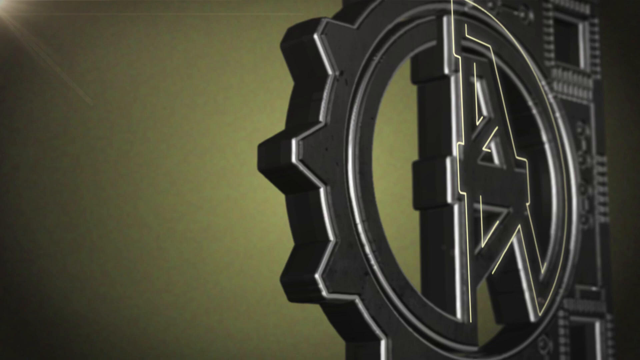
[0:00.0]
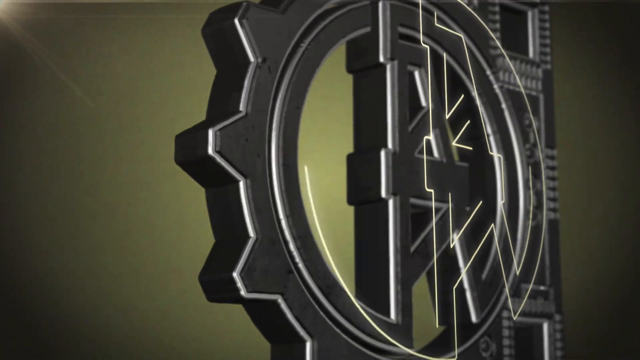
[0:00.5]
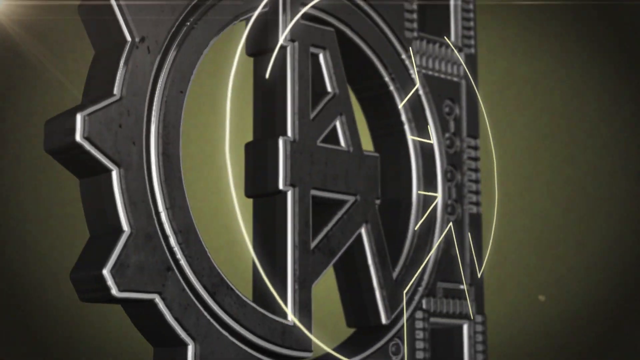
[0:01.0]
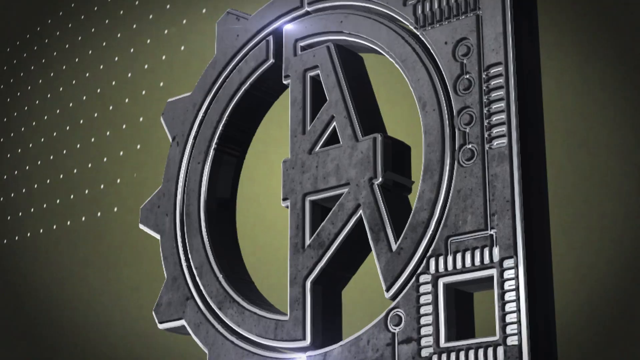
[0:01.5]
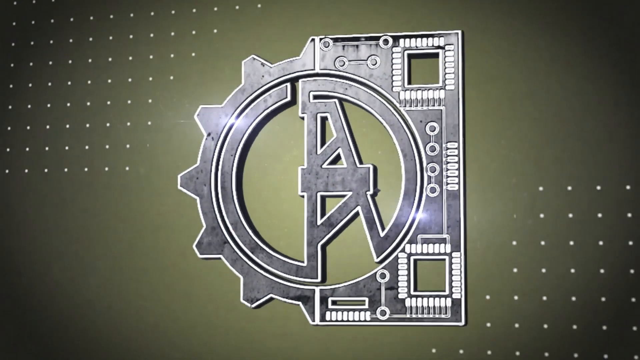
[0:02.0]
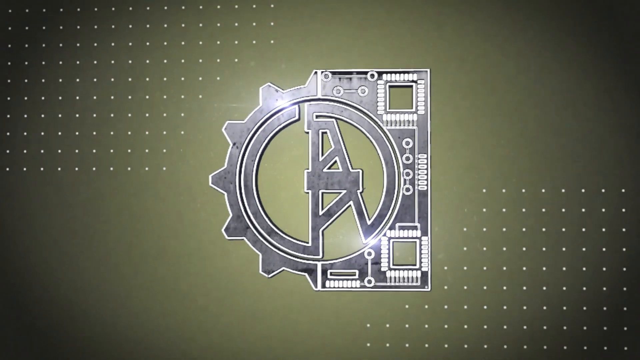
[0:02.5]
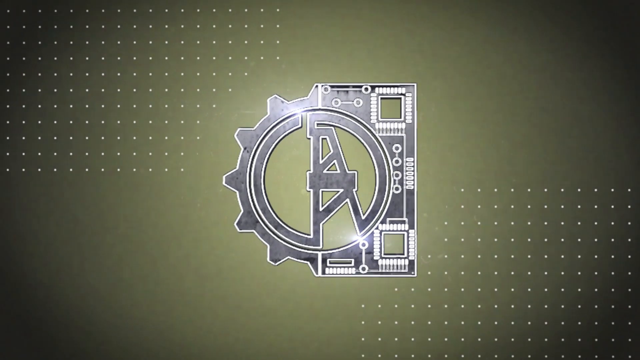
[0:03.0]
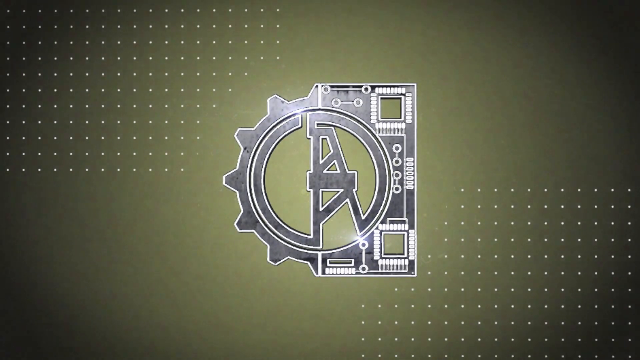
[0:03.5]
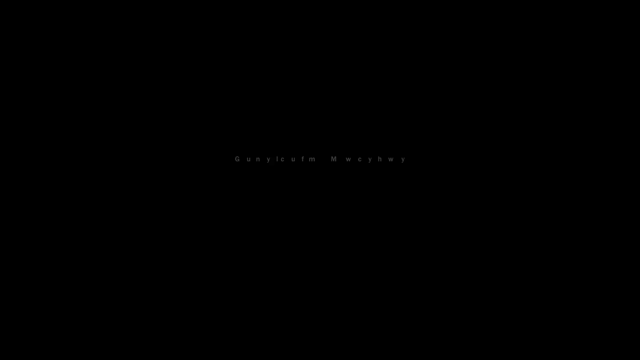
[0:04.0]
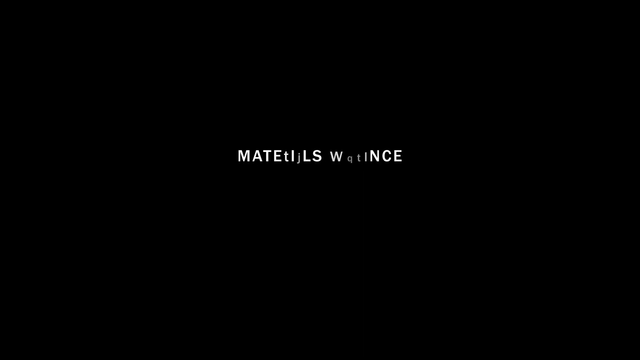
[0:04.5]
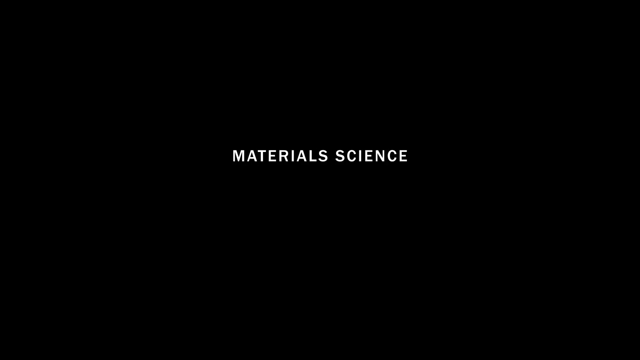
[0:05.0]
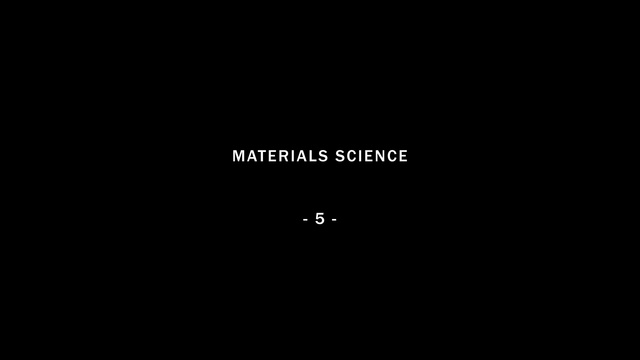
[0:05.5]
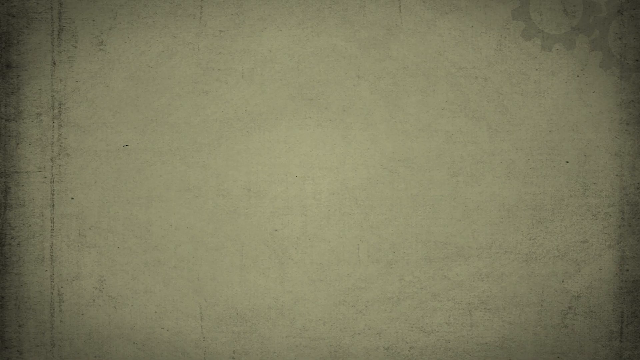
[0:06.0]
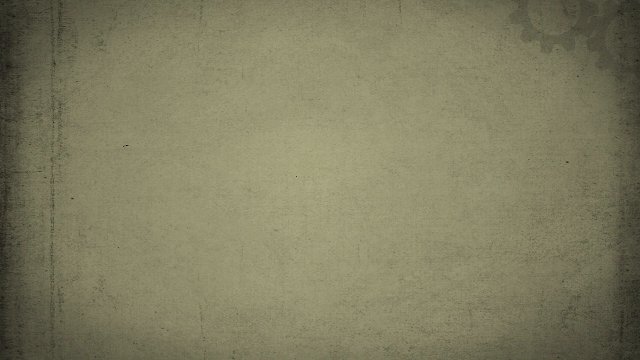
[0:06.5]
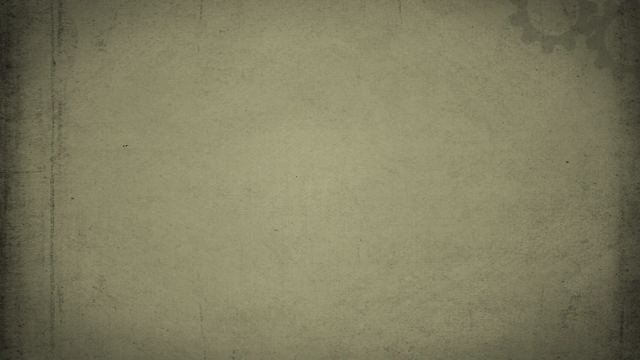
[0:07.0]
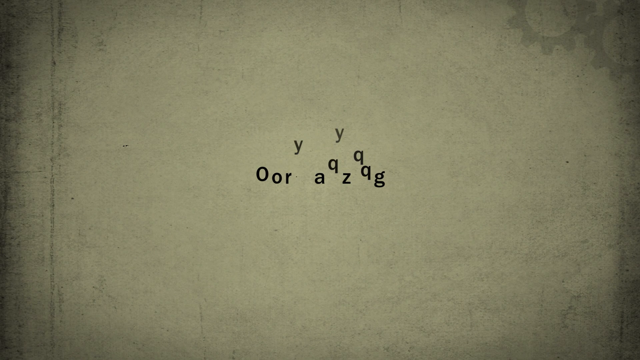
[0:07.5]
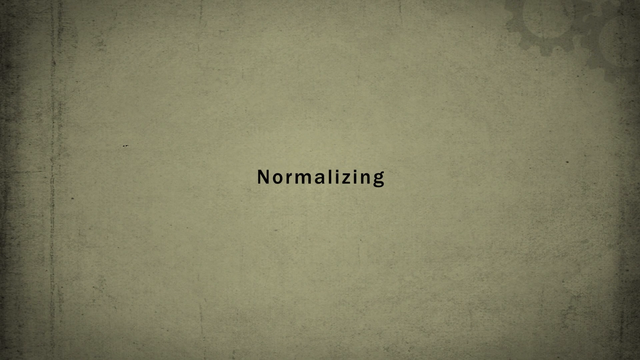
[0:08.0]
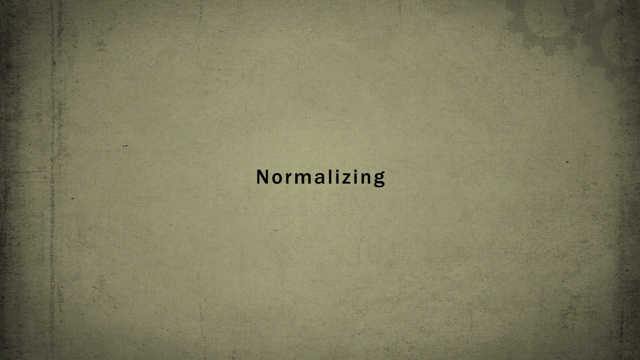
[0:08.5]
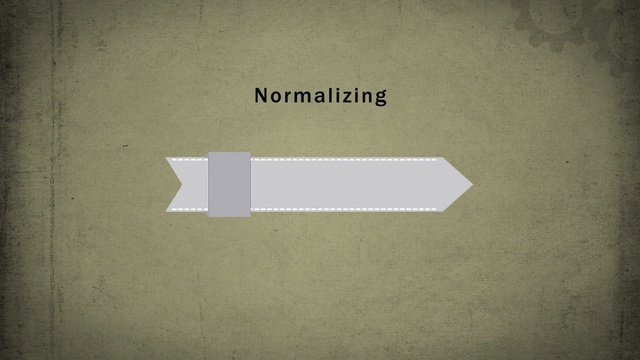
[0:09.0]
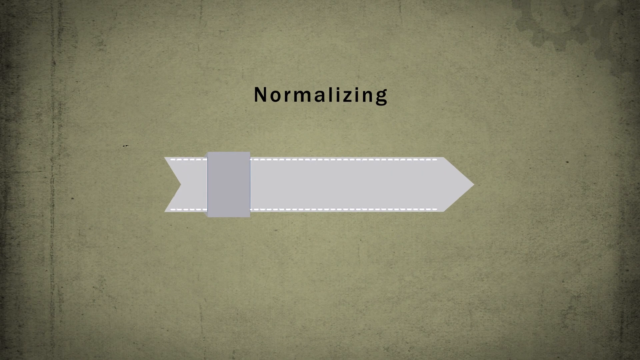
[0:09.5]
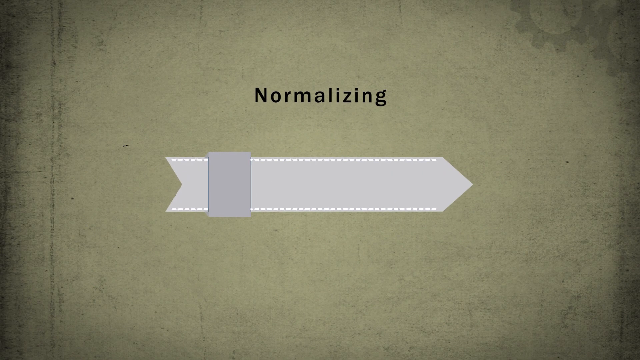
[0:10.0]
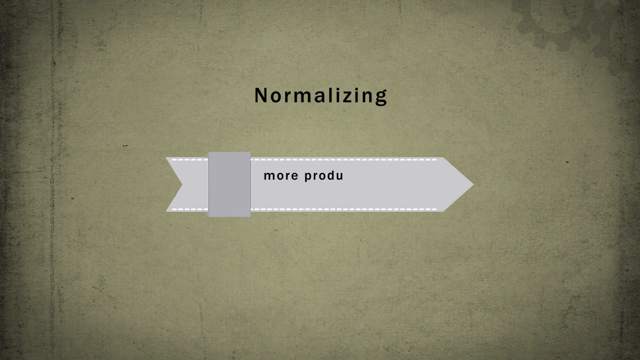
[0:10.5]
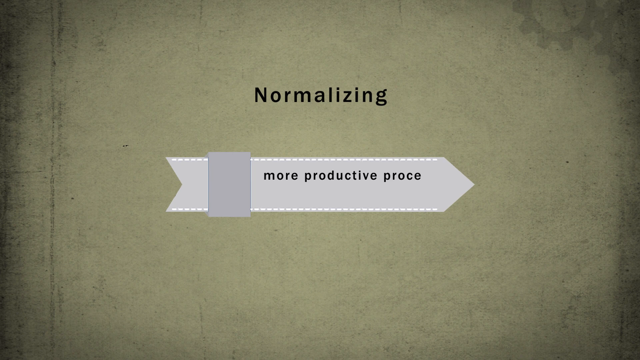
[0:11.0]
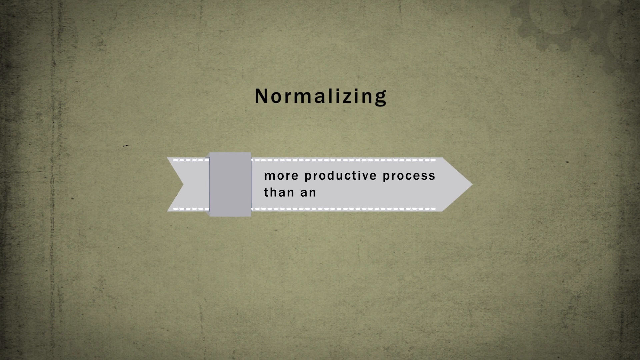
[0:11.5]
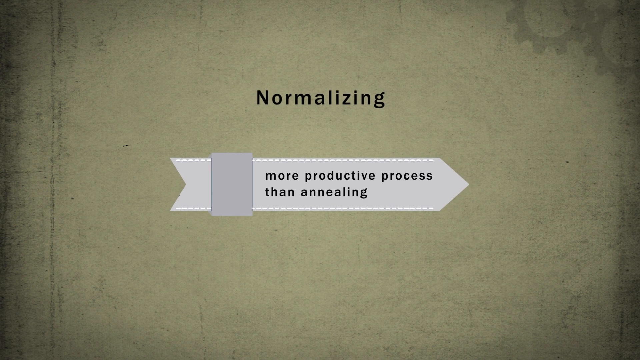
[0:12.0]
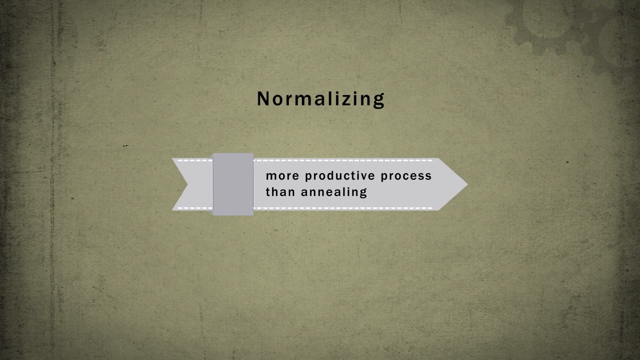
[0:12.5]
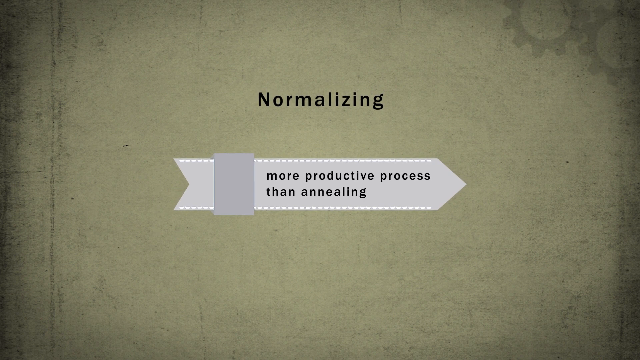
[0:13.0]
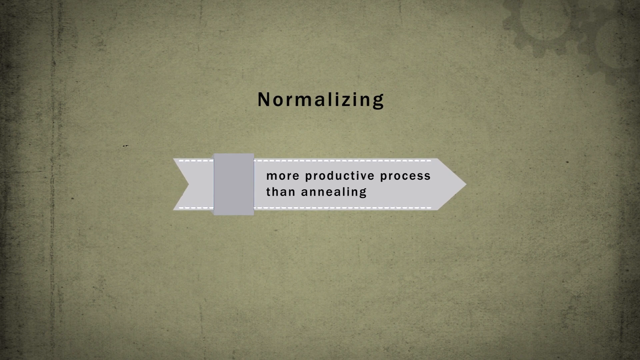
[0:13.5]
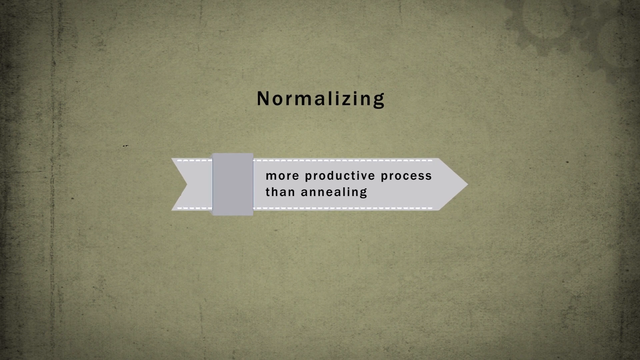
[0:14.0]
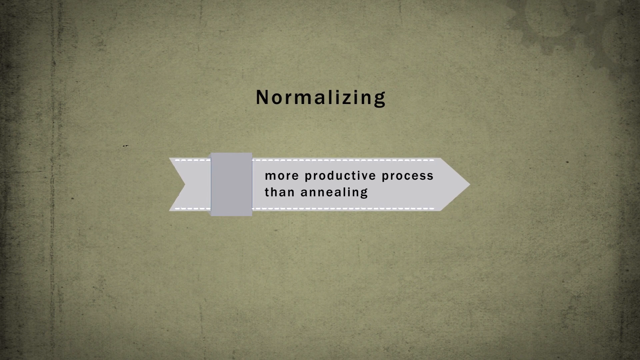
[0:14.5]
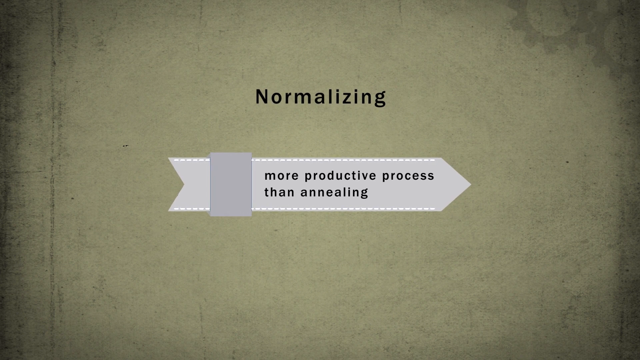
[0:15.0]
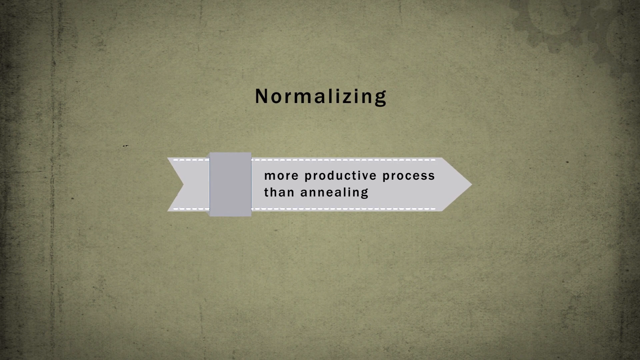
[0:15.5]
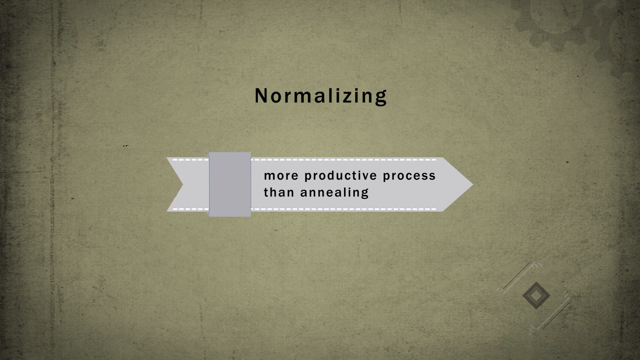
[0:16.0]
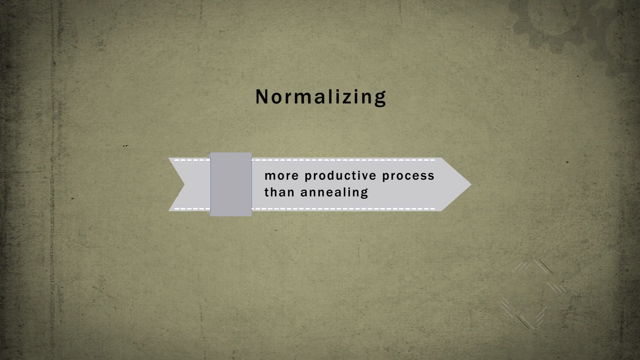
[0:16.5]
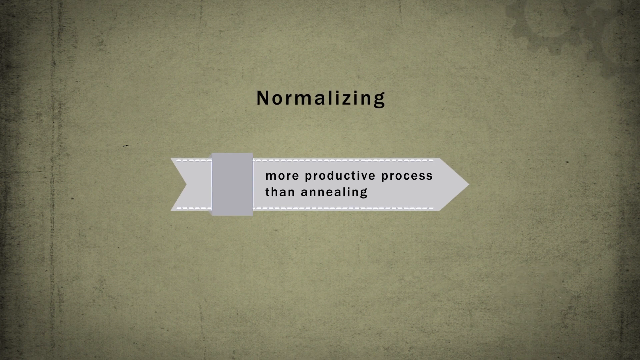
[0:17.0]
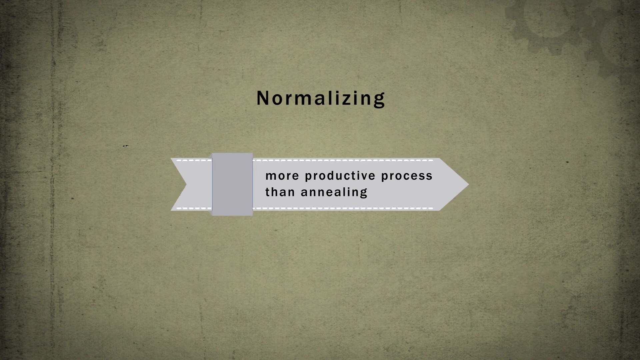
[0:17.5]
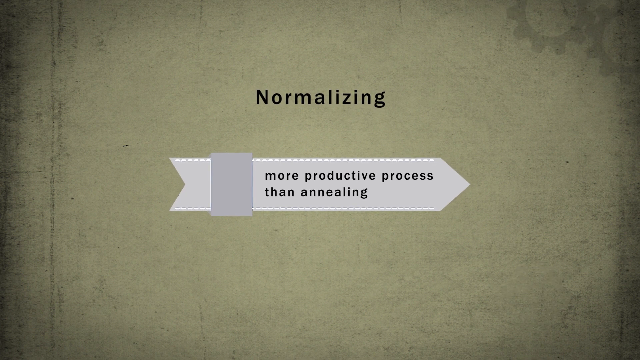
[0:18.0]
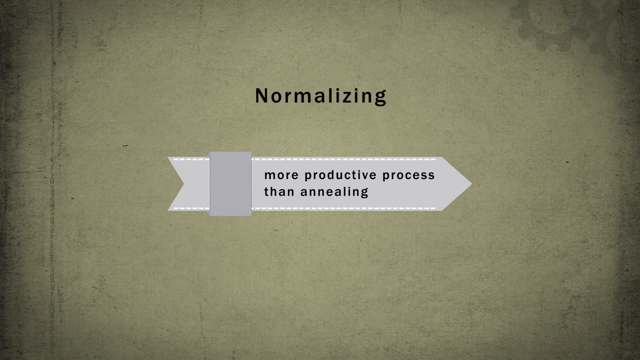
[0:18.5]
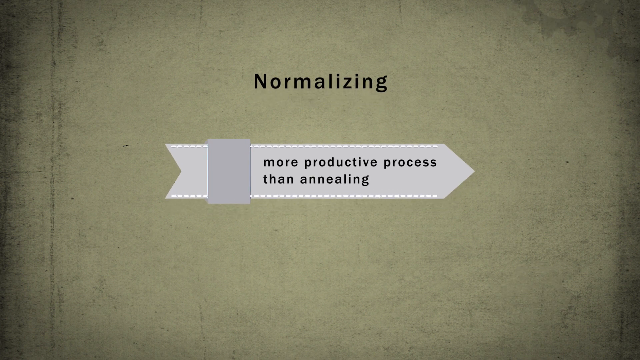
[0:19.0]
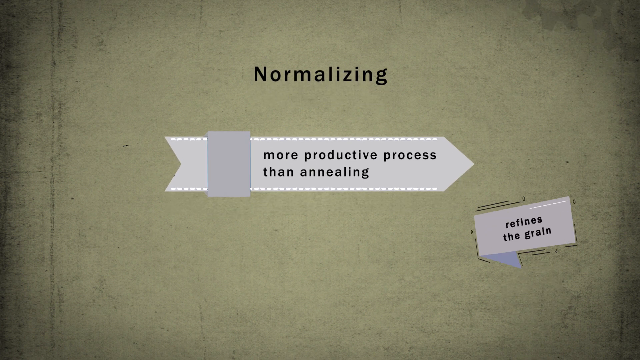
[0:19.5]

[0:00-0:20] The video opens with a small design introduction: white text on a black background reads "material science -5-". Next, on a grayish background, letters drop in and form a word in the middle in black font: "normalizing". Underneath it, a white arrow or background pointing to the right appears, and the words "more productive process than annealing" pop up on it in black font. A small diamond seems to come up at the bottom right of the screen, and then another sign pops up at the bottom right, also with a white-grayish background. This one is more of a rectangle, and inside it black text reads "refines the grain".